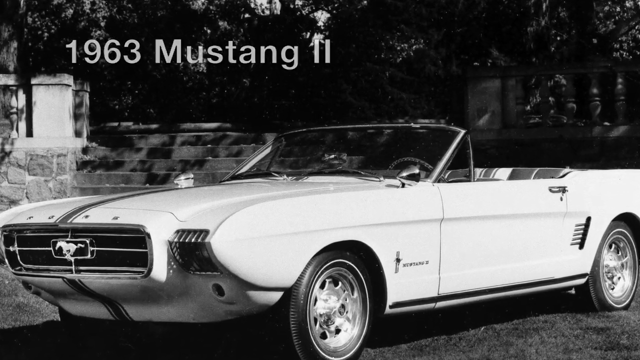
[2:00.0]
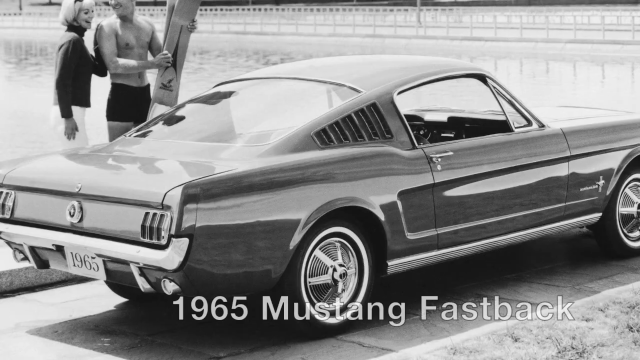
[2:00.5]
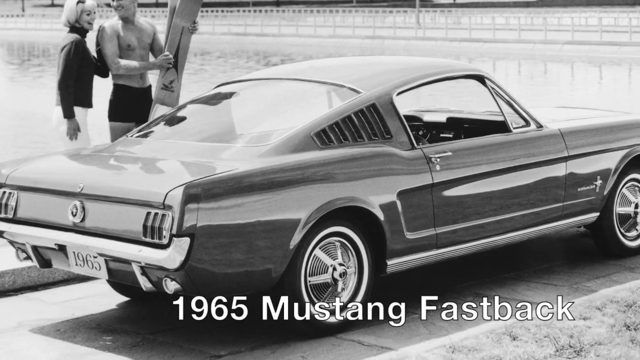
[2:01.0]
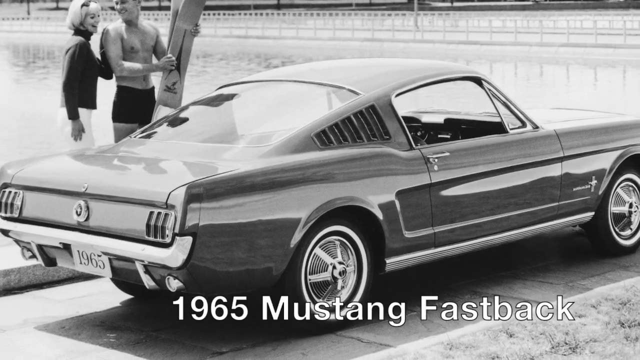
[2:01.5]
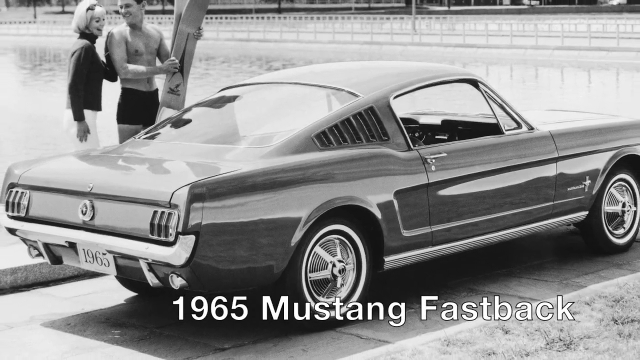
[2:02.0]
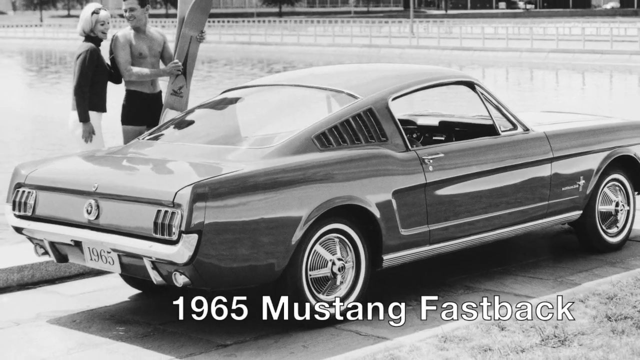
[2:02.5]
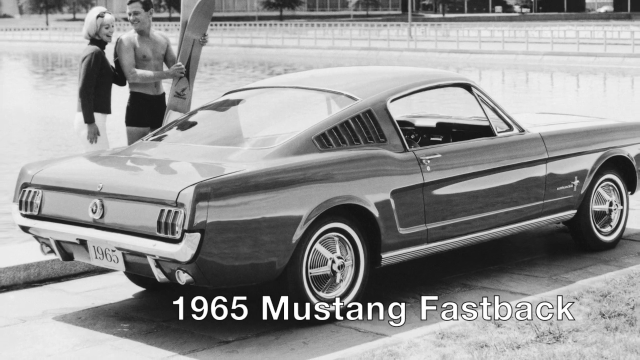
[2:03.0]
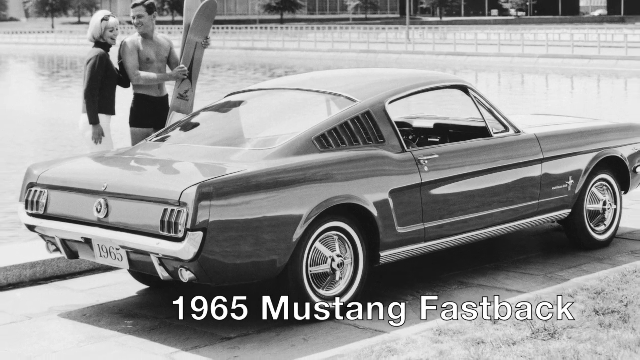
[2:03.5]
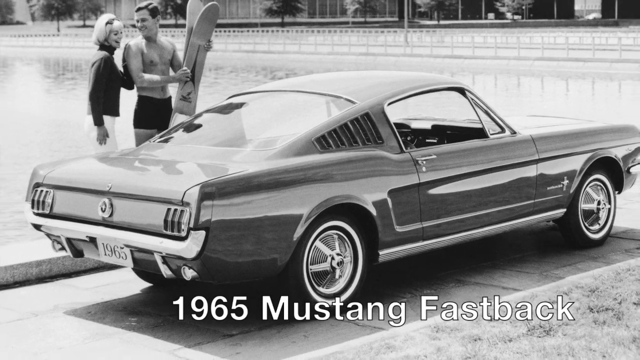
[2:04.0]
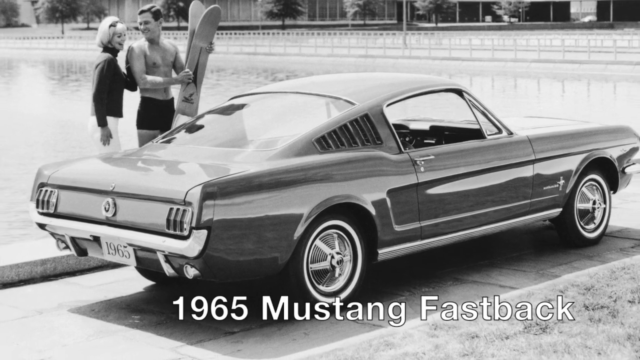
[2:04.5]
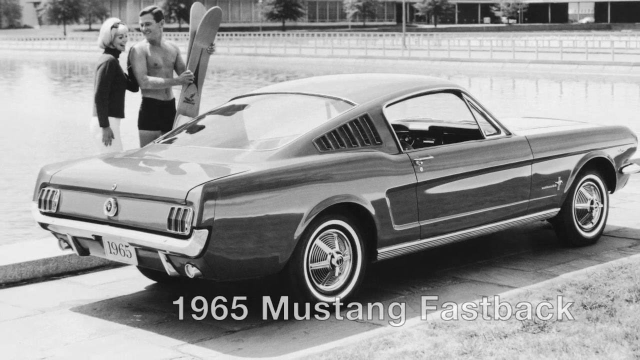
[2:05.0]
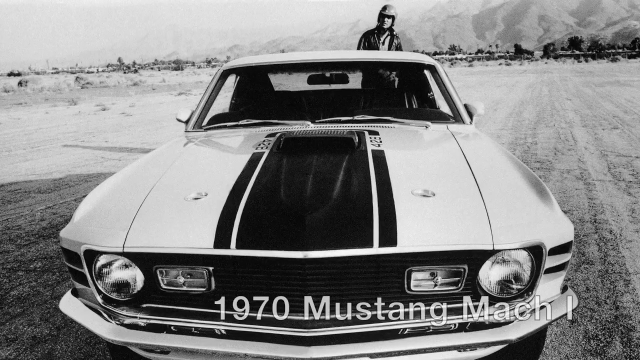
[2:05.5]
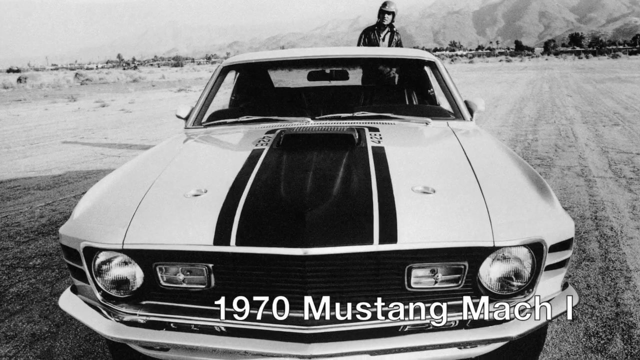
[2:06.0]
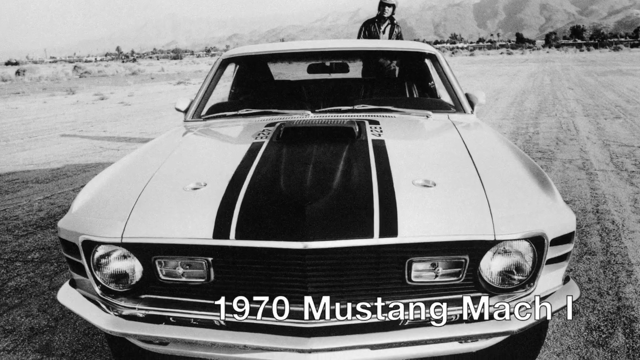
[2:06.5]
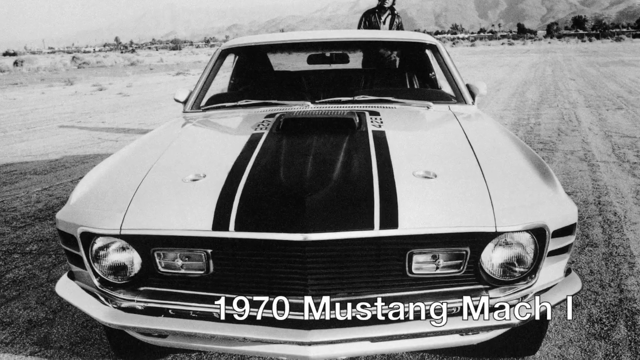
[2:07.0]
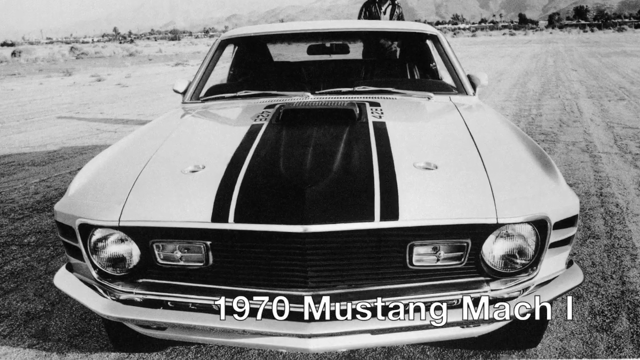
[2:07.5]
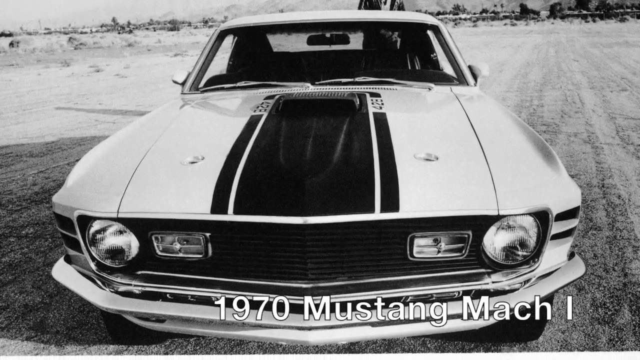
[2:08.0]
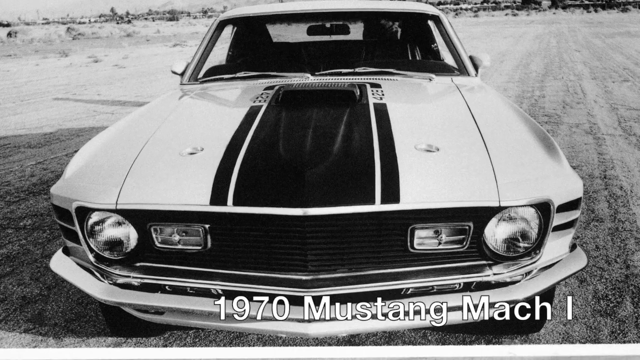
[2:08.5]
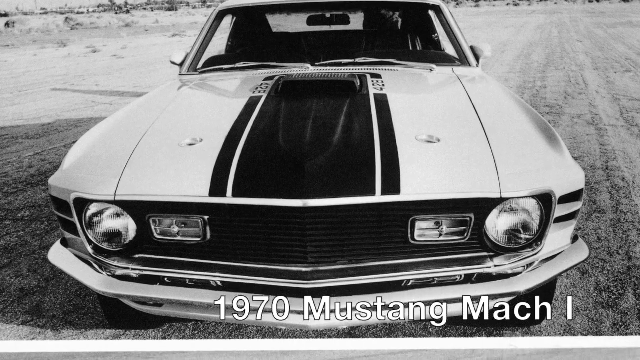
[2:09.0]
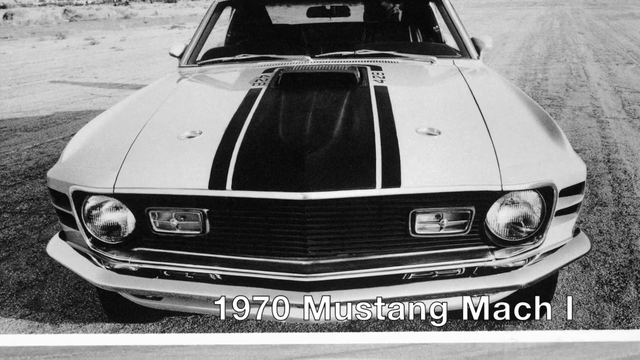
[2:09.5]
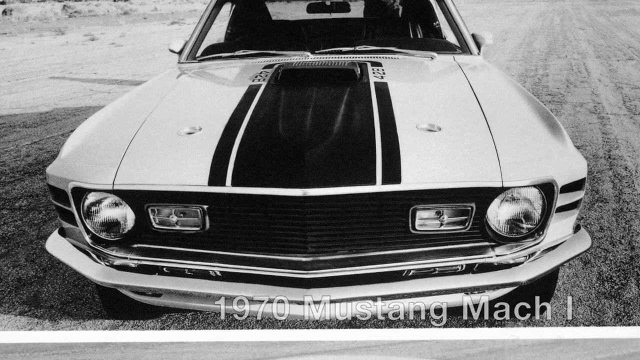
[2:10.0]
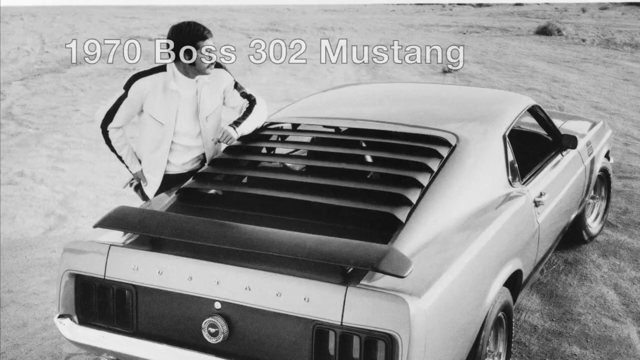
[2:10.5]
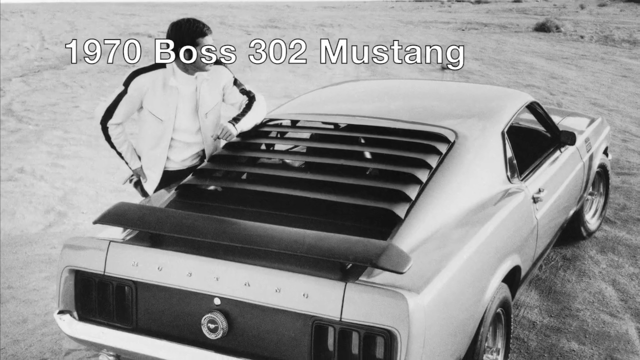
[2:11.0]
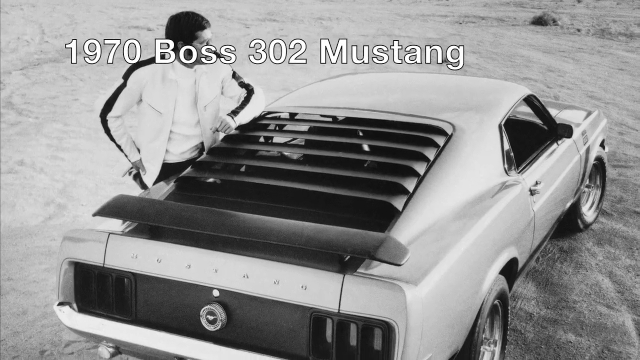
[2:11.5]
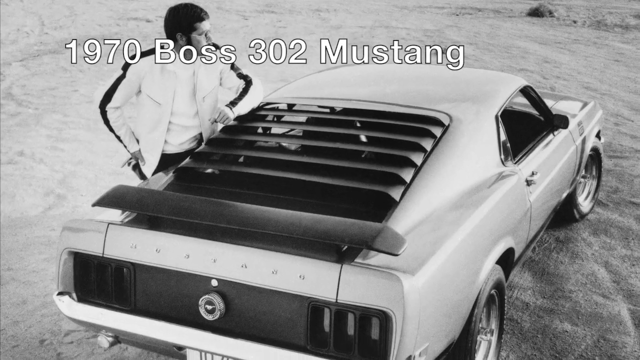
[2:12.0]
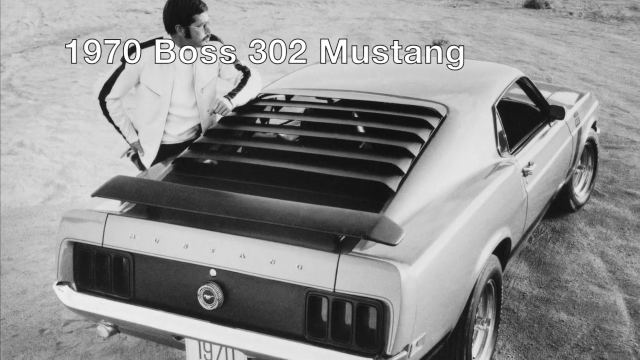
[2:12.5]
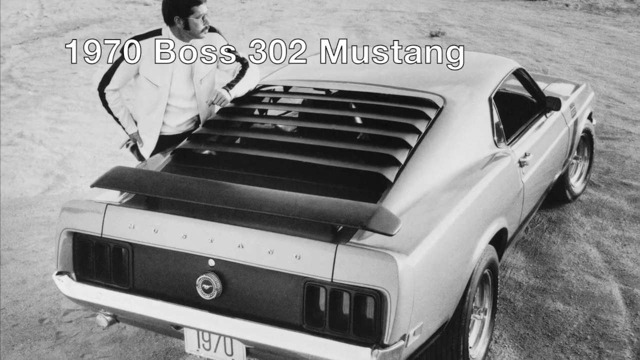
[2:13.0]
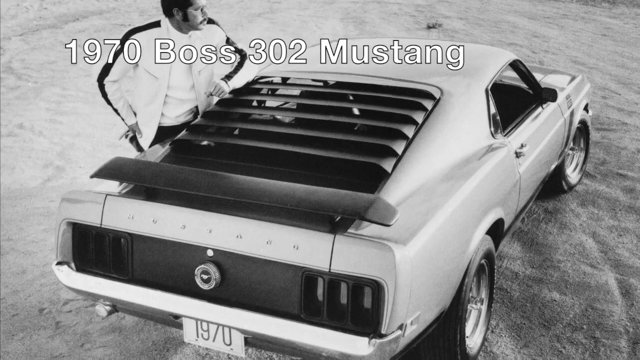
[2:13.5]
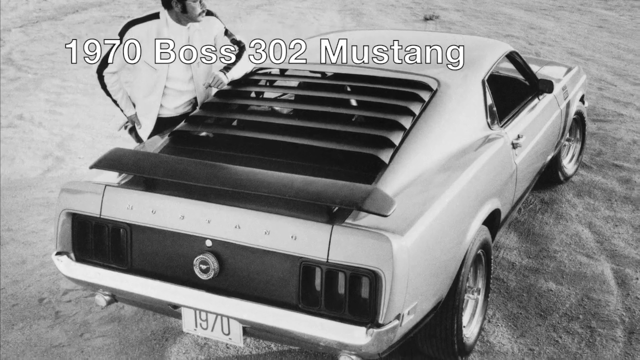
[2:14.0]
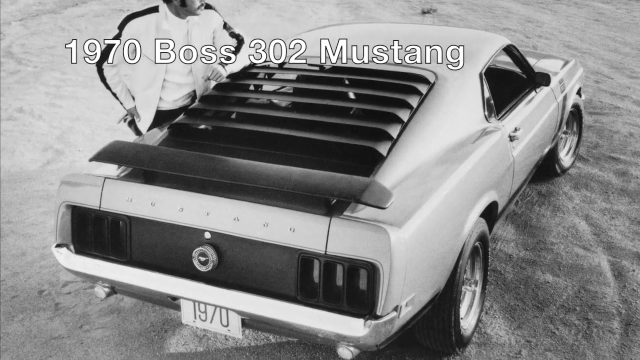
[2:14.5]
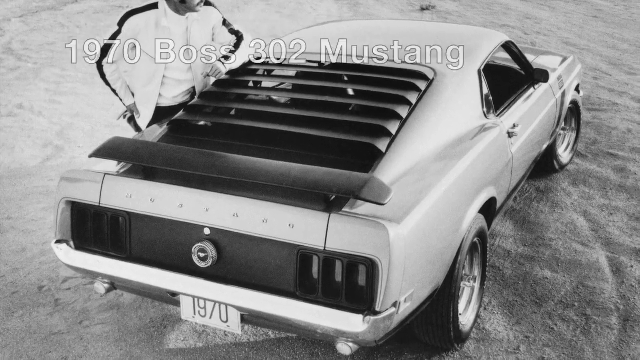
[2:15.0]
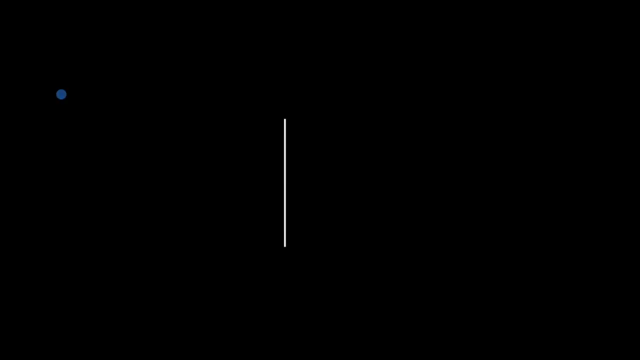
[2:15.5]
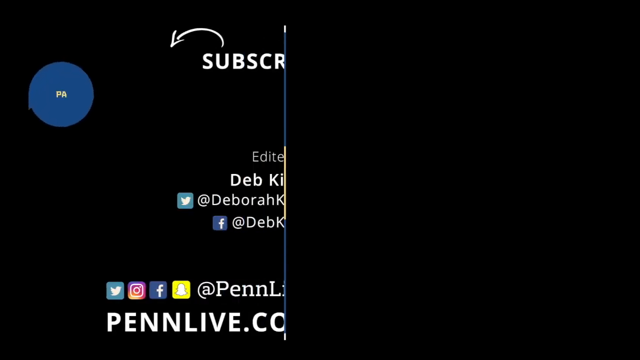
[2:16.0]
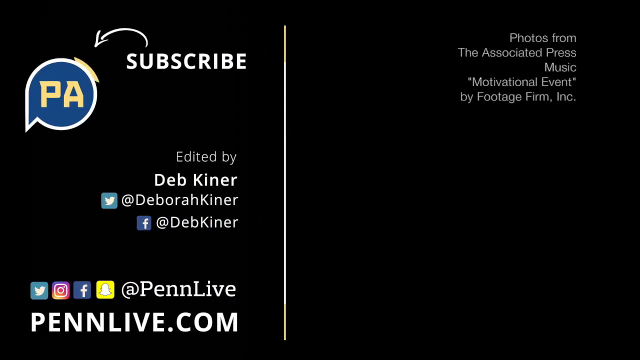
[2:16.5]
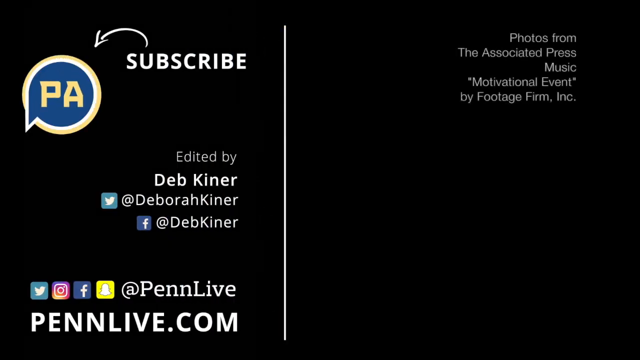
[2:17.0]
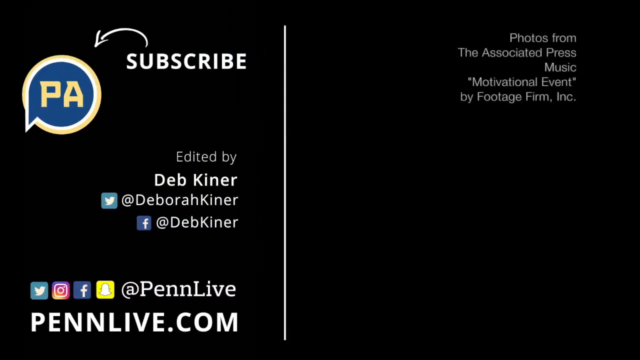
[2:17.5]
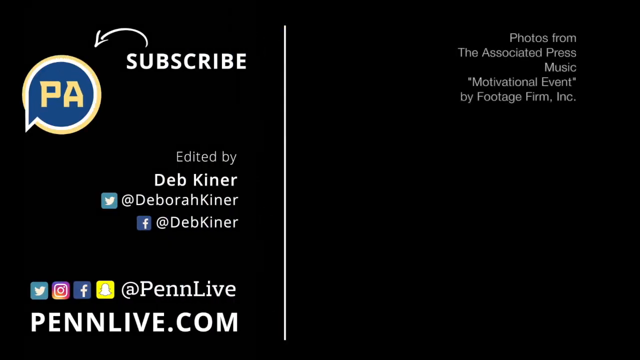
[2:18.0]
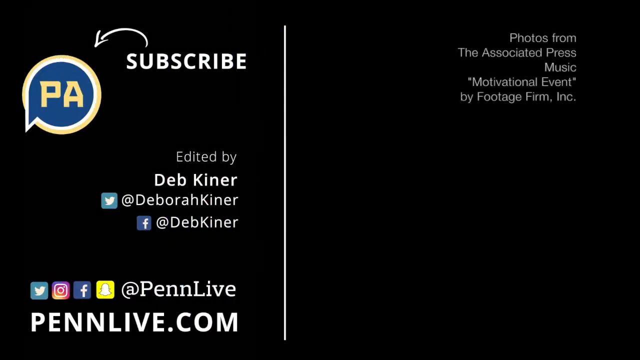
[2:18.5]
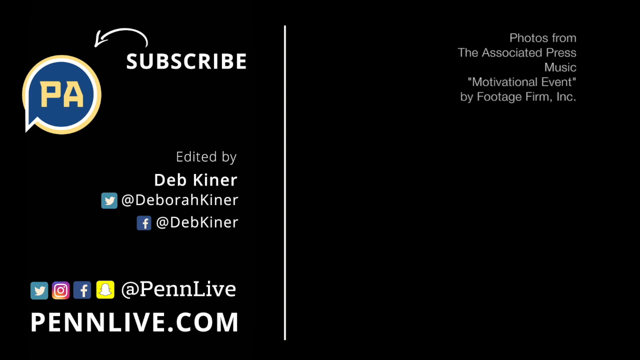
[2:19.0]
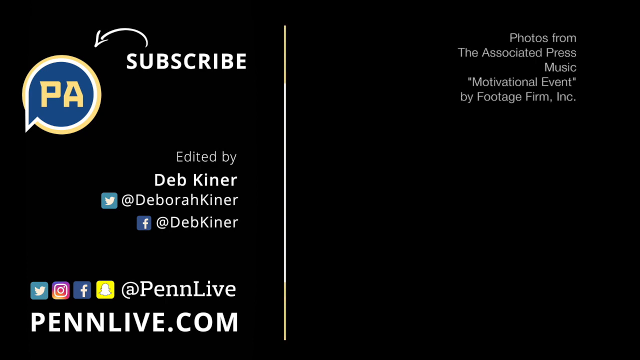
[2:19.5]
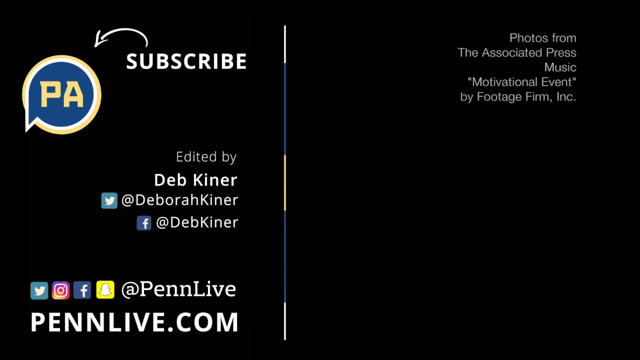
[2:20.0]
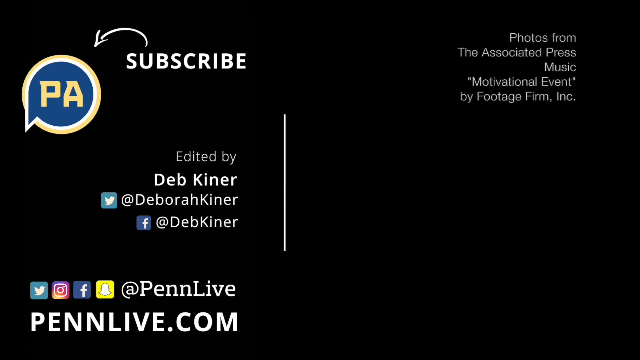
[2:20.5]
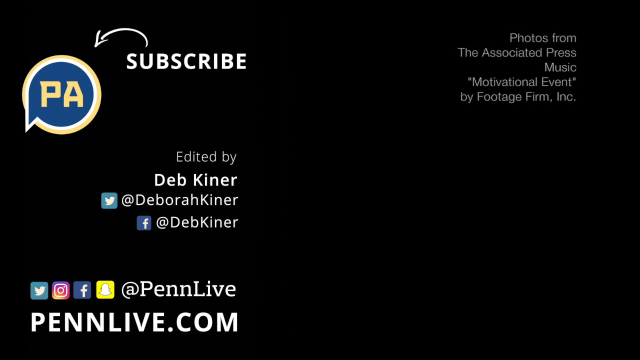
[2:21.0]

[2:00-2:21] A shot of the 1963 Mustang II shows a fairly long vehicle, a convertible with flip-down headlights. The progression continues with the 1965 Mustang Hatchback, then the 1970 Mustang Mach 1, followed by the 1970 Boss 302 Mustang muscle car. The 1965 Mustang Hatchback and the Mustang Mach 1 look similar in many ways but differ in the lines along the body.